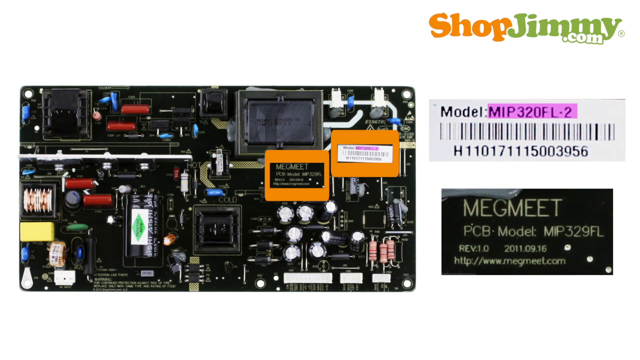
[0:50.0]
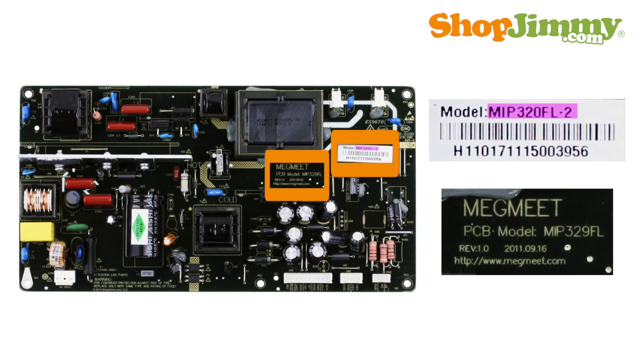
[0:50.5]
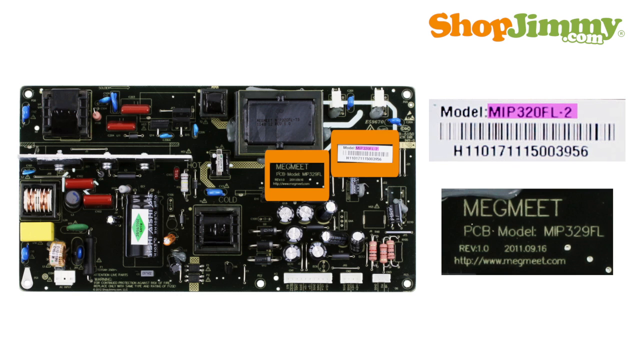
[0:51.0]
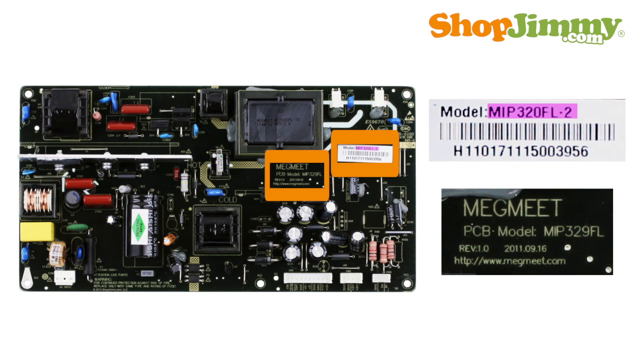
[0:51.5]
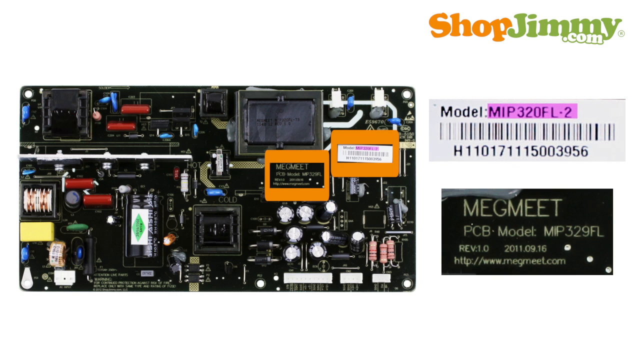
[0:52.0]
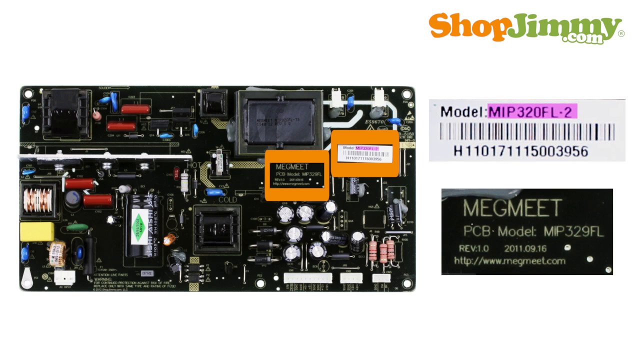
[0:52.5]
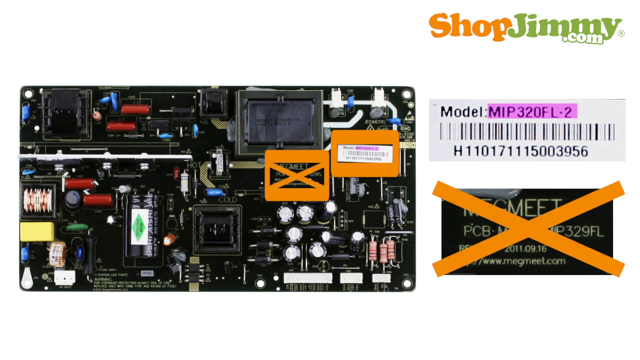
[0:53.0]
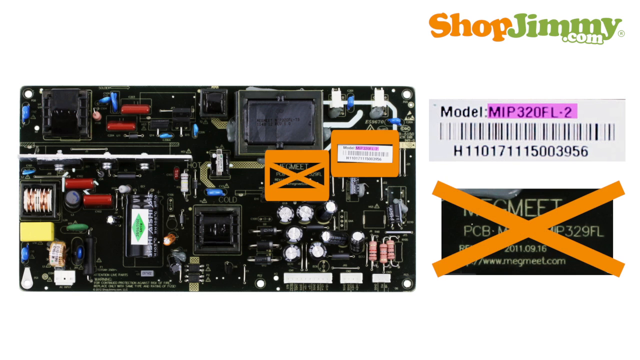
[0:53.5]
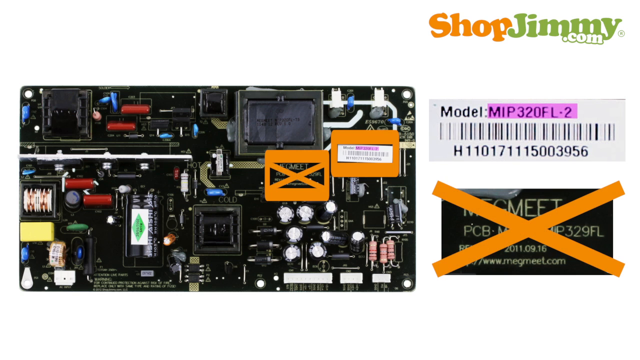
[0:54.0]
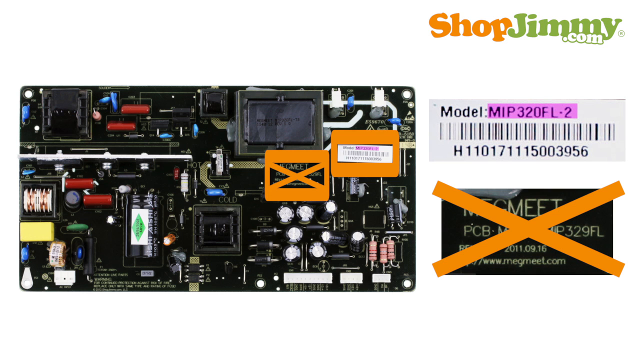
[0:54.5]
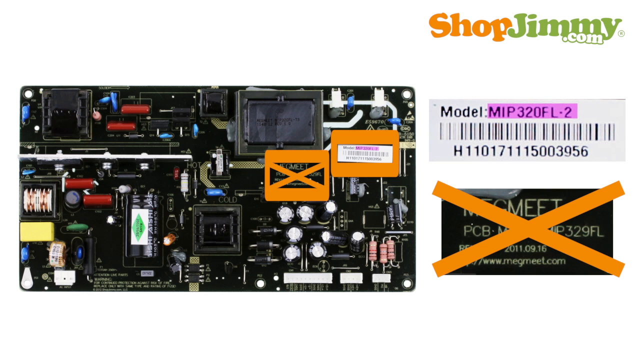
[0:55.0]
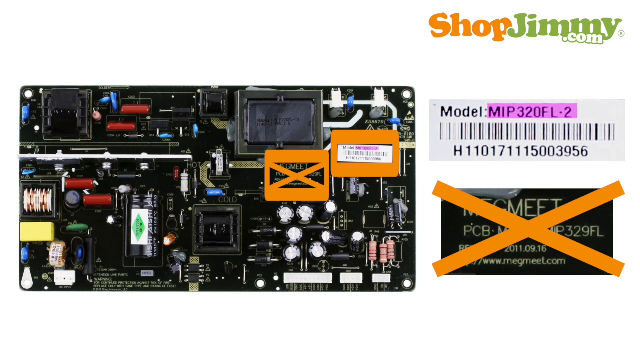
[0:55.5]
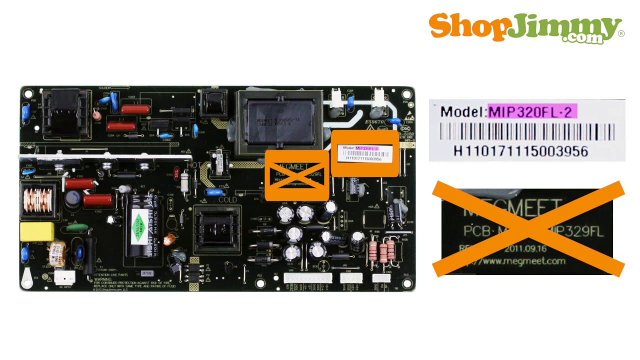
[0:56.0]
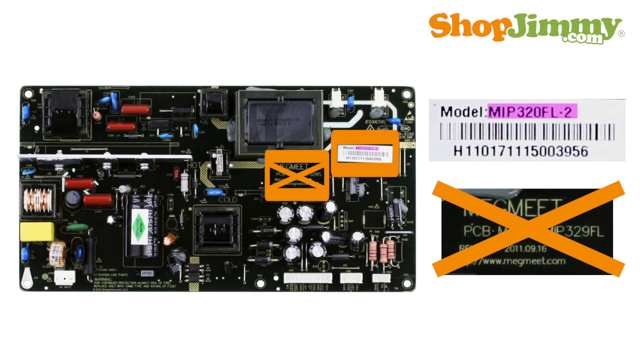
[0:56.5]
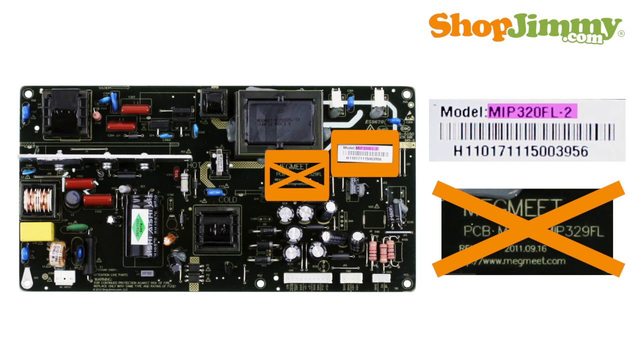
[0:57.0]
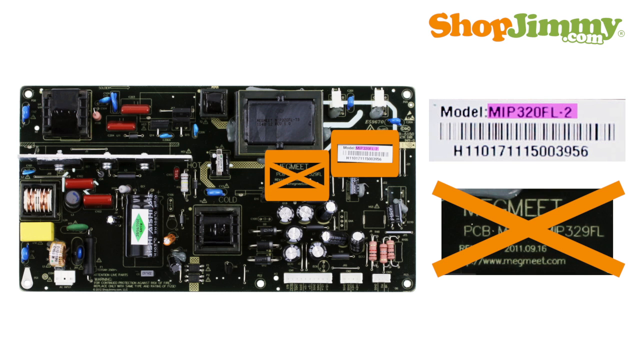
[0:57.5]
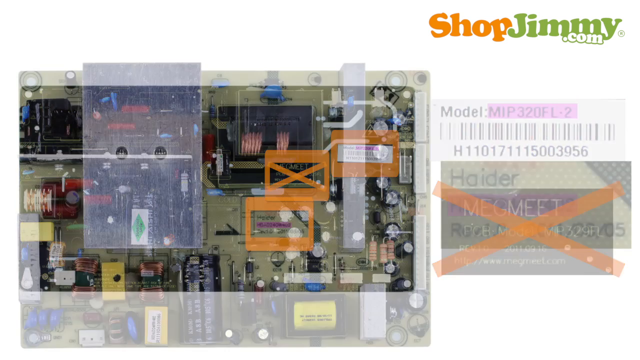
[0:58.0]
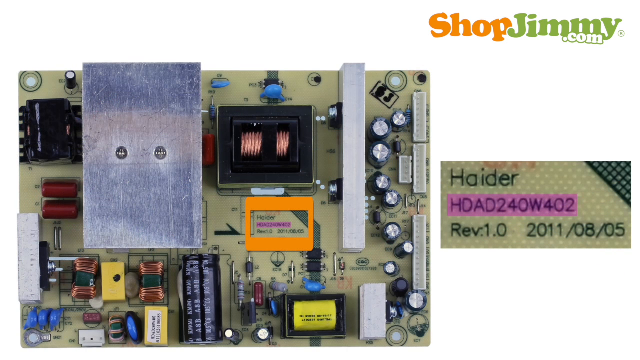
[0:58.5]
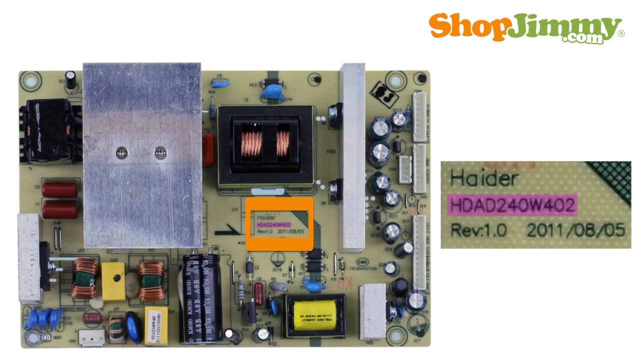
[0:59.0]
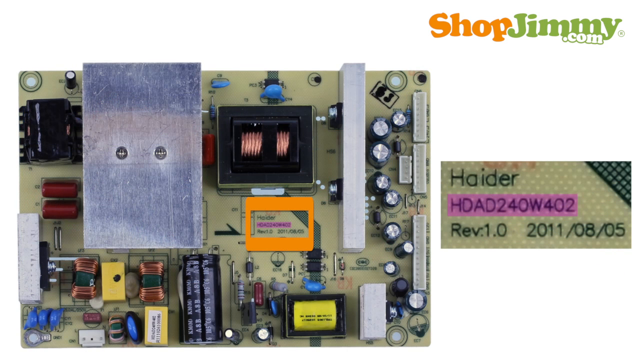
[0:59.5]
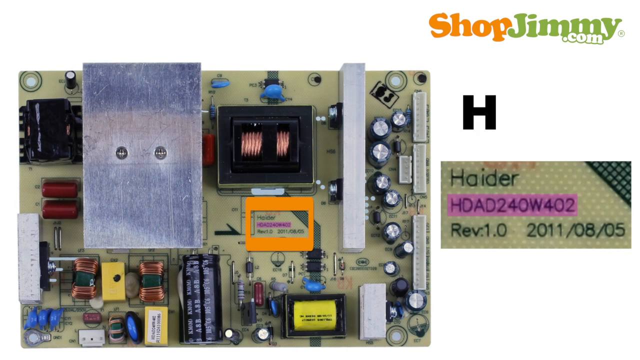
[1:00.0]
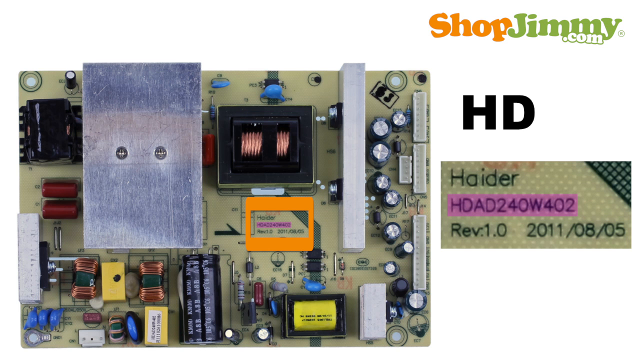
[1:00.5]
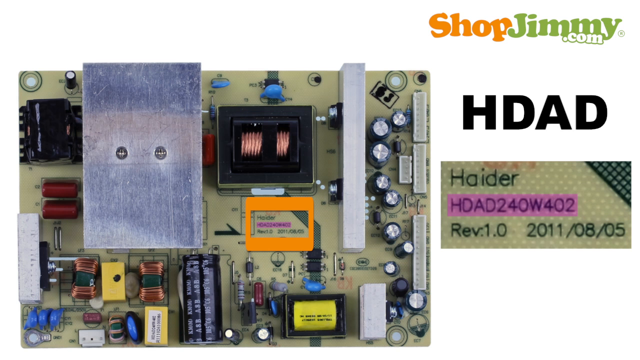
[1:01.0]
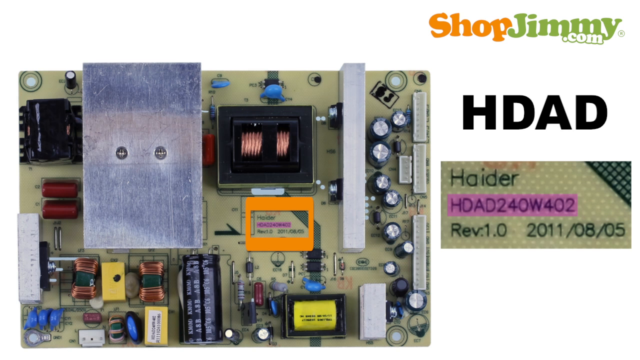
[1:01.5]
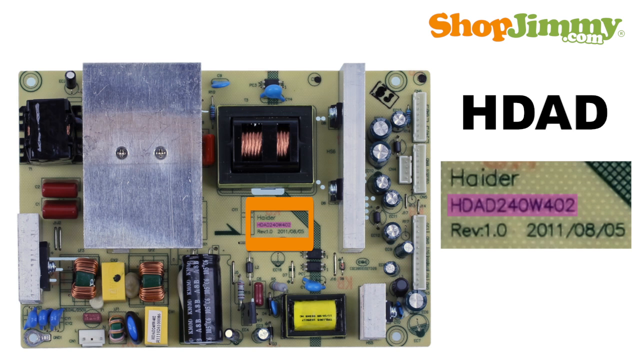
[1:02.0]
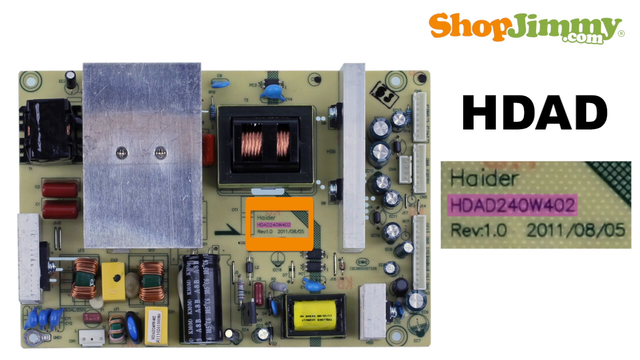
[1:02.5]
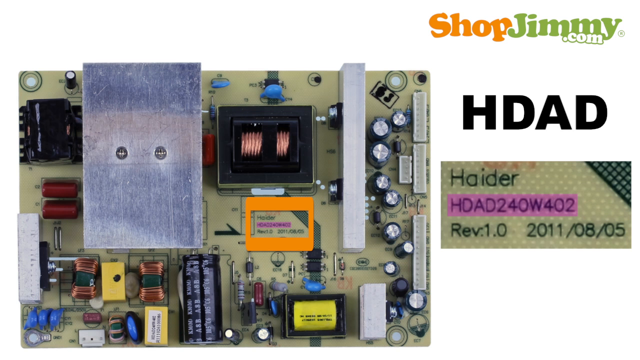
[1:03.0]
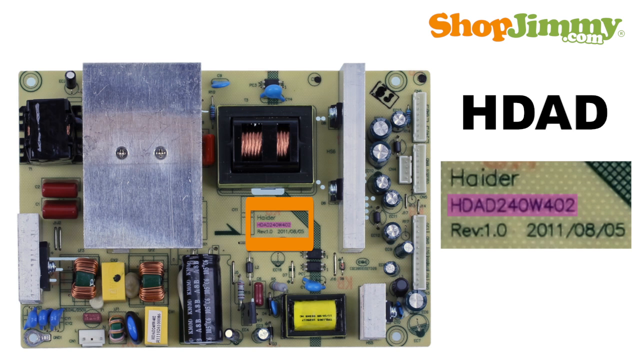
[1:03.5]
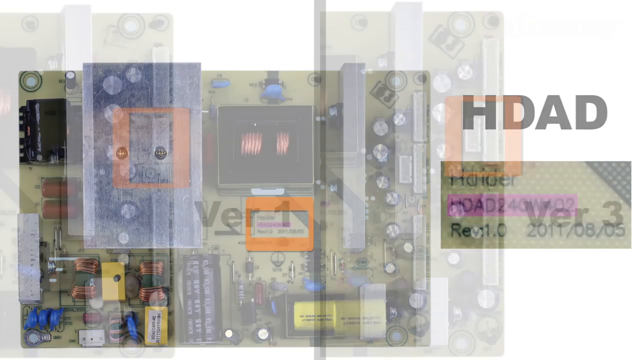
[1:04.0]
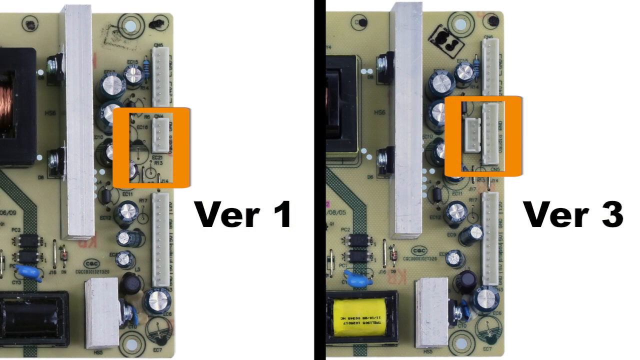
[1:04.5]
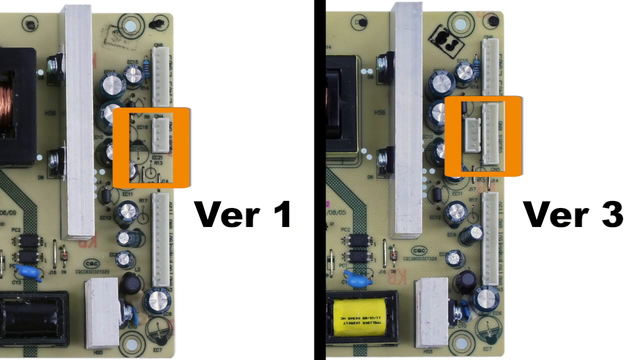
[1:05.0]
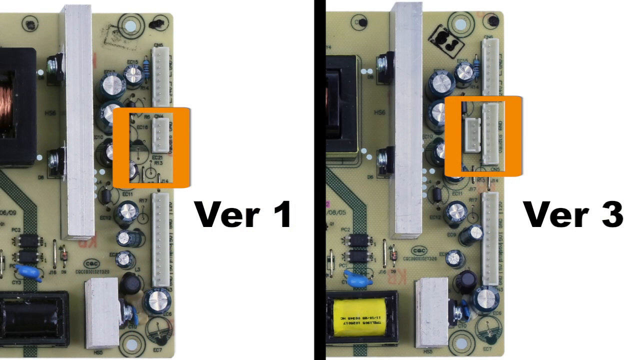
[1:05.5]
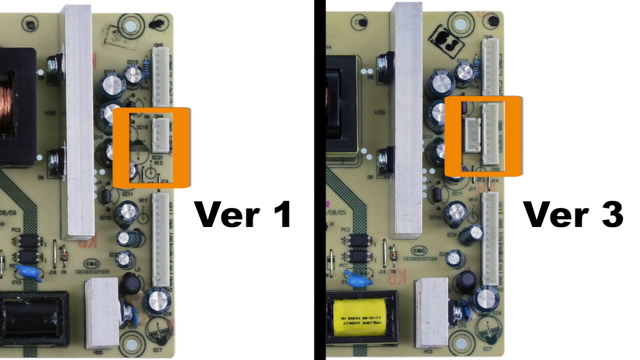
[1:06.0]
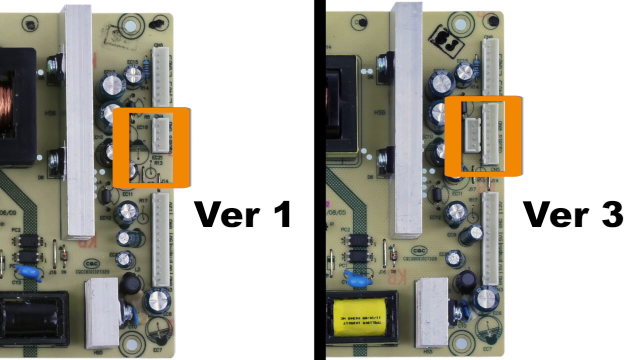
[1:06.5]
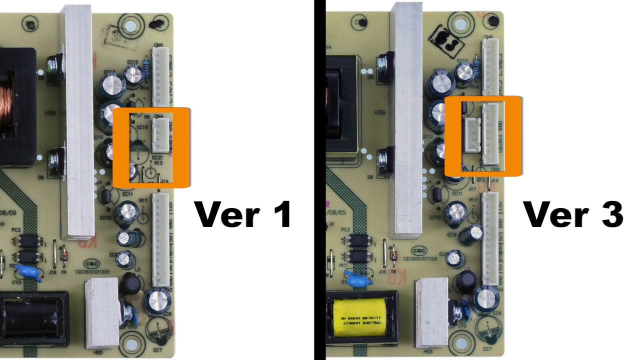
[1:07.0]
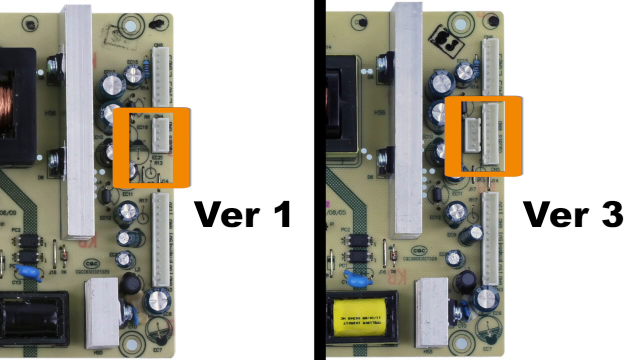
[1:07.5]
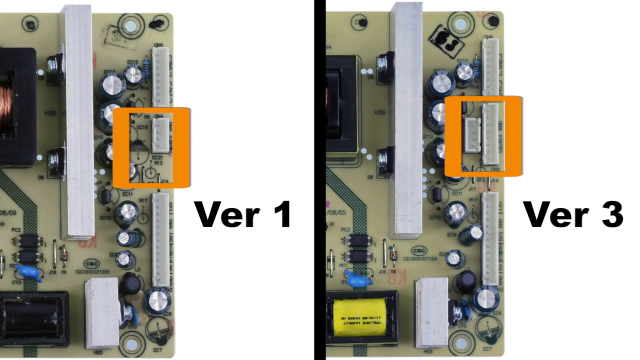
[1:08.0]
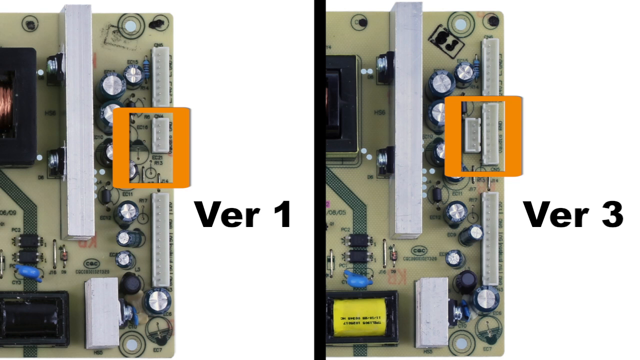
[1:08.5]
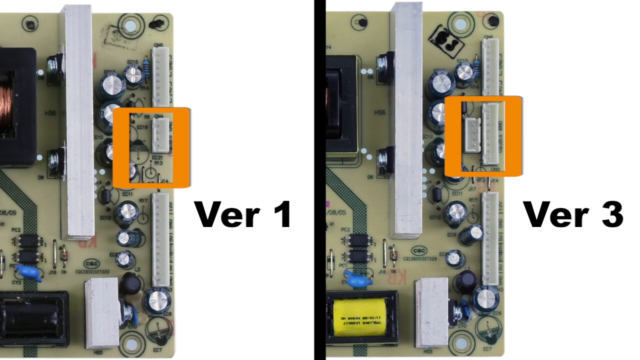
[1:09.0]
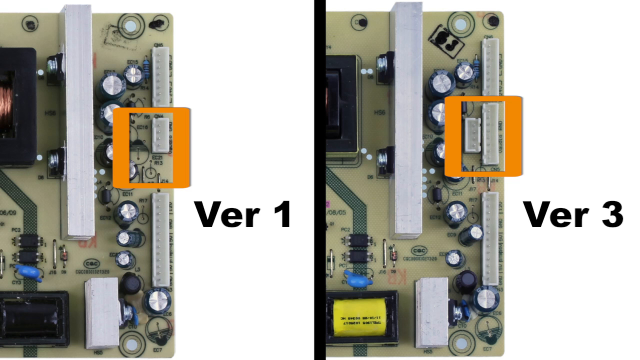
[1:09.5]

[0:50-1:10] A large black motherboard or chip-like part covered with white transistors and other electronic parts fills the screen. Part of it is highlighted in an orange rectangle and zoomed in on two separate photographs on the right. The top photo shows a barcode sticker reading "model MIP320FL-2", then a barcode, then lettering reading "H110171115003956". The other photograph shows a black sticker on the same motherboard reading "MEGMEET-PCB model MIP329FL-RIEV1.0-2011.09.16. http://www.megmeet.com". An orange X then appears on the zoomed-in black sticker, apparently indicating that this sticker is not the one being referred to, while the barcode and model remain visible. The video cuts to a similar but different green motherboard, also with a section highlighted in an orange rectangle and zoomed in on the right, reading "HADER HDAD240W402 REV 1.0 2011-08-05". Then two versions of the same green motherboard are shown side by side; version 1 has one less plug than version 3.